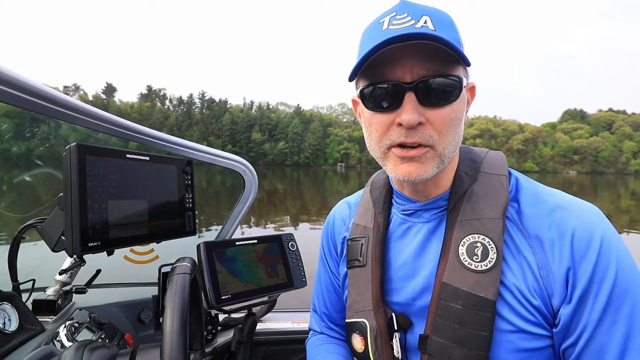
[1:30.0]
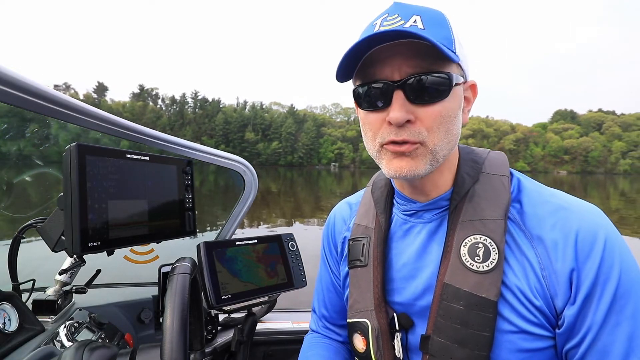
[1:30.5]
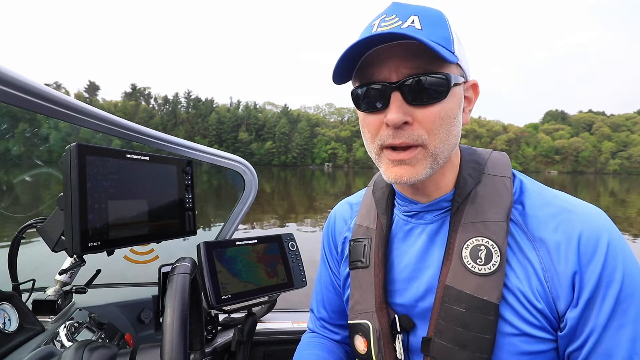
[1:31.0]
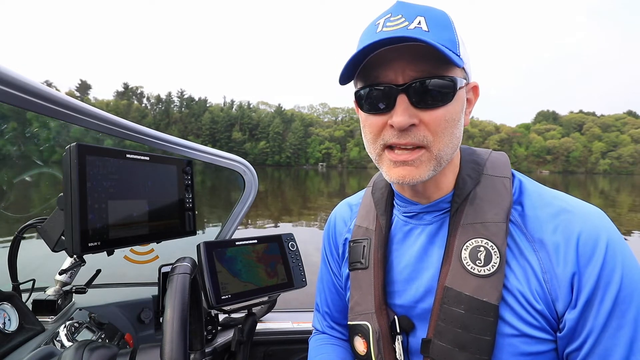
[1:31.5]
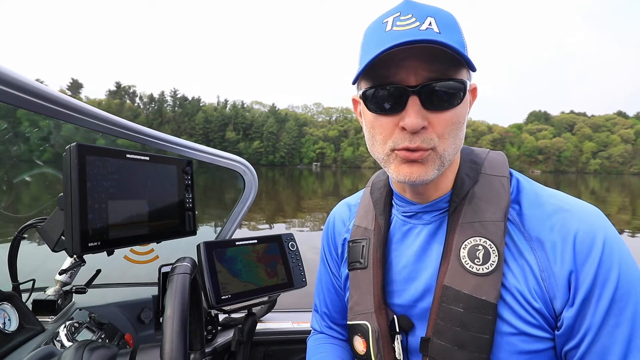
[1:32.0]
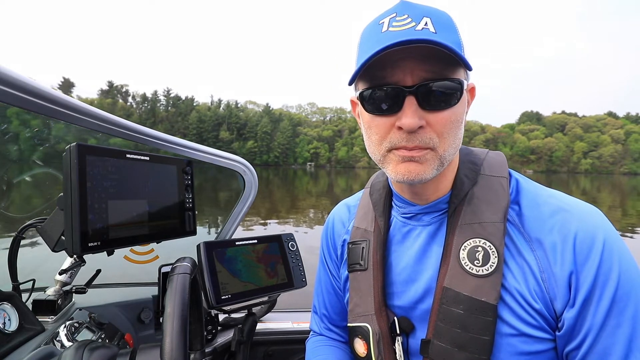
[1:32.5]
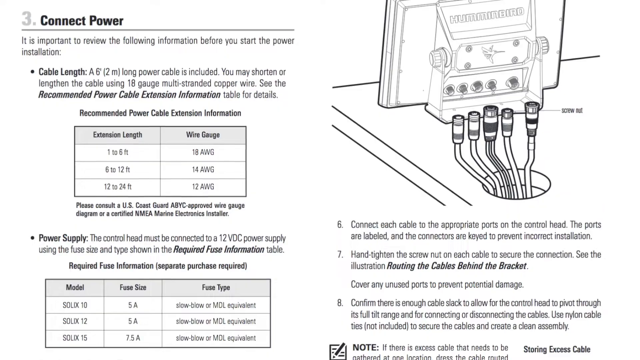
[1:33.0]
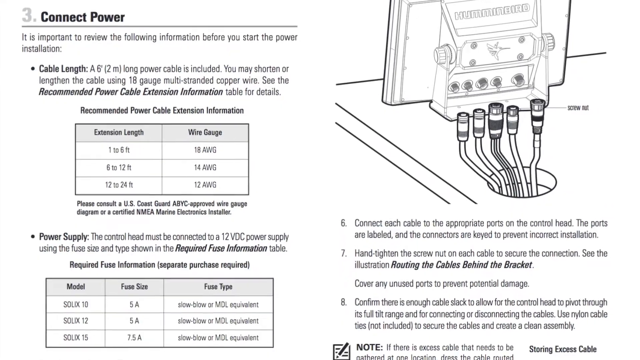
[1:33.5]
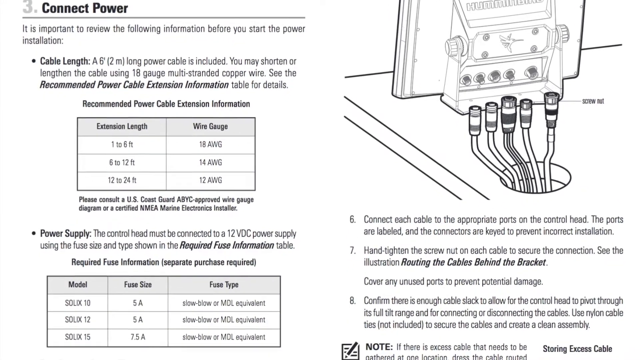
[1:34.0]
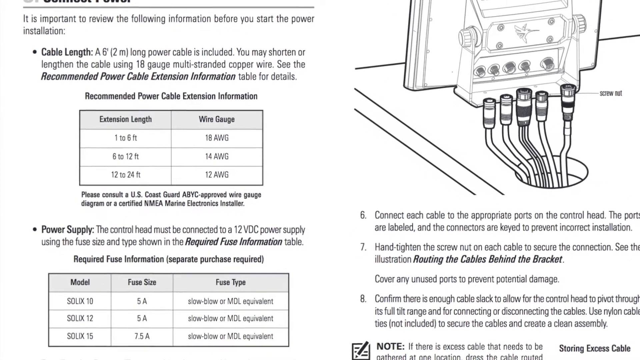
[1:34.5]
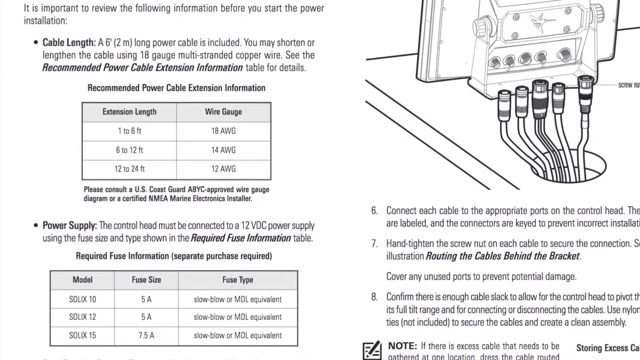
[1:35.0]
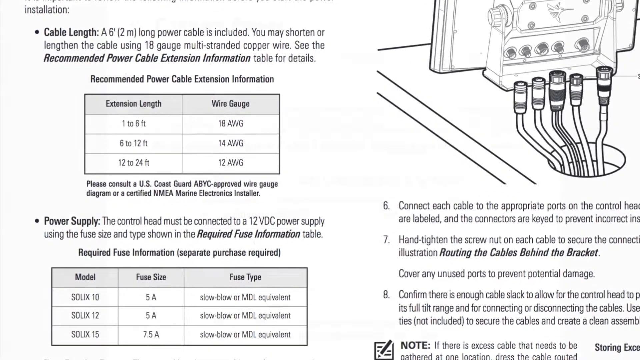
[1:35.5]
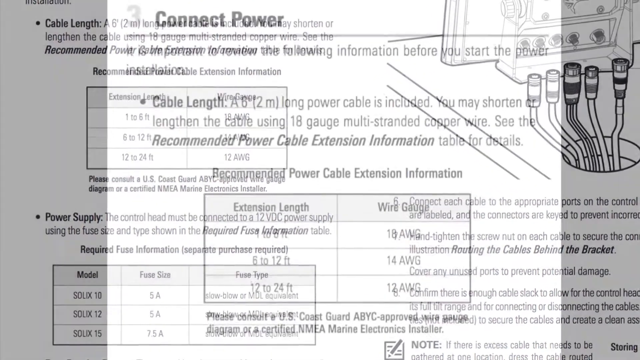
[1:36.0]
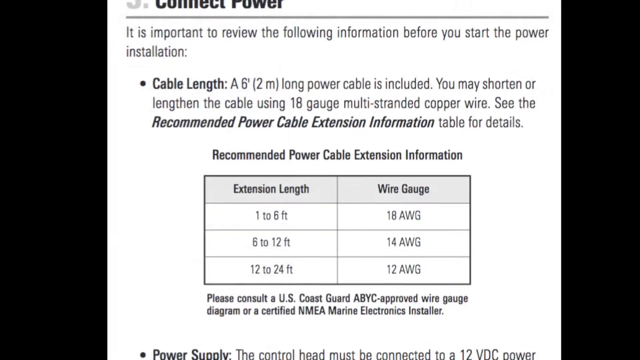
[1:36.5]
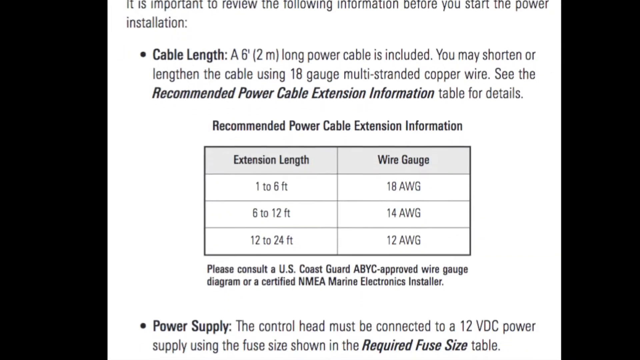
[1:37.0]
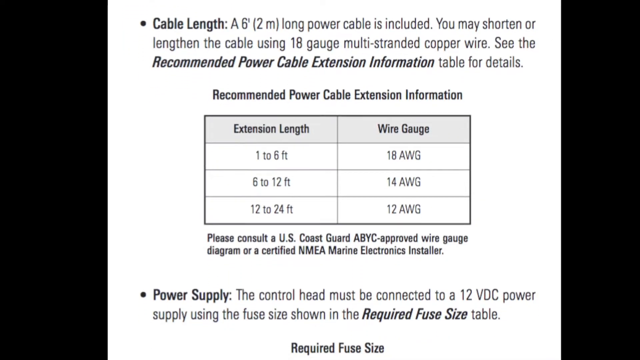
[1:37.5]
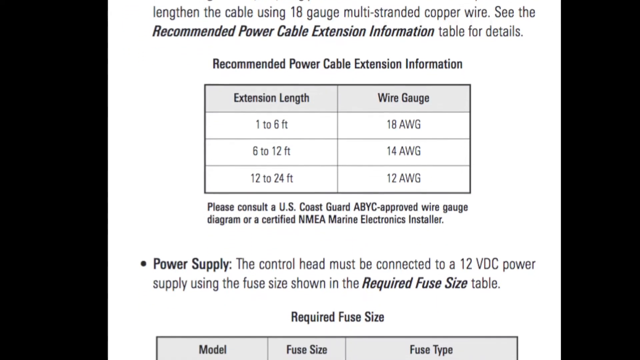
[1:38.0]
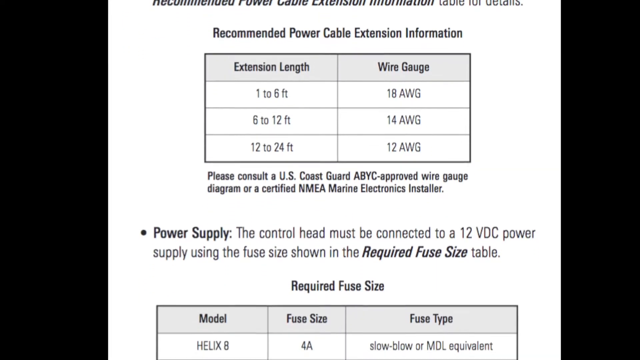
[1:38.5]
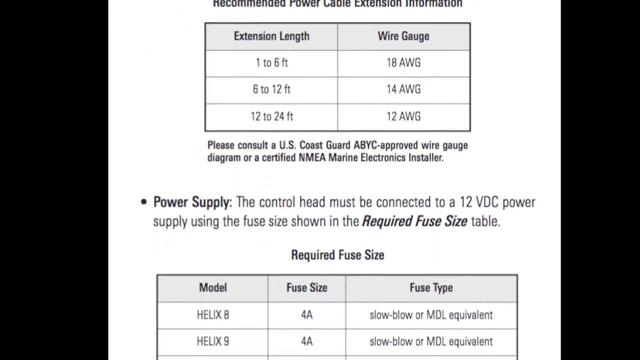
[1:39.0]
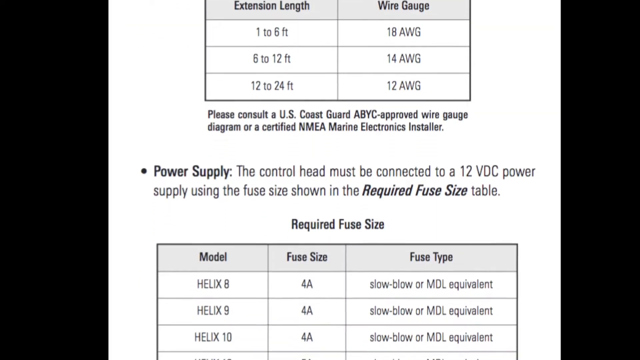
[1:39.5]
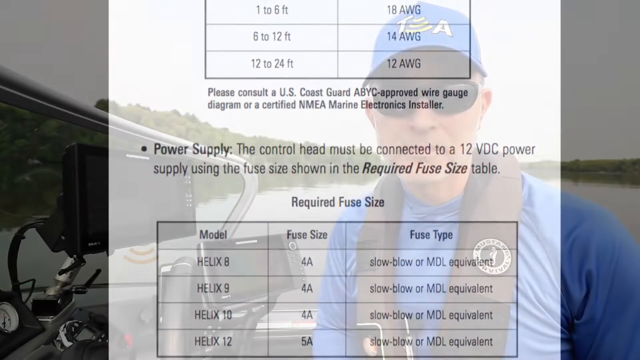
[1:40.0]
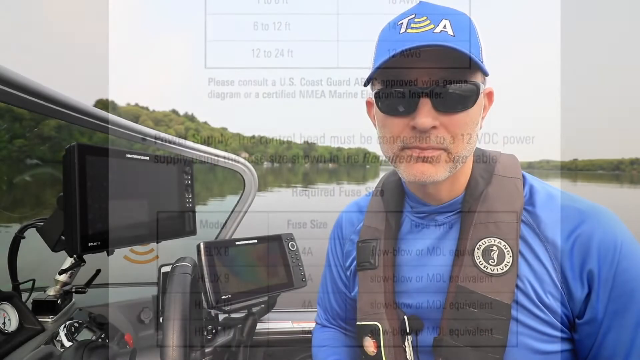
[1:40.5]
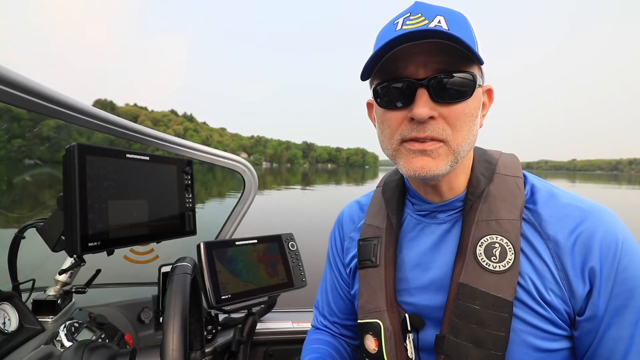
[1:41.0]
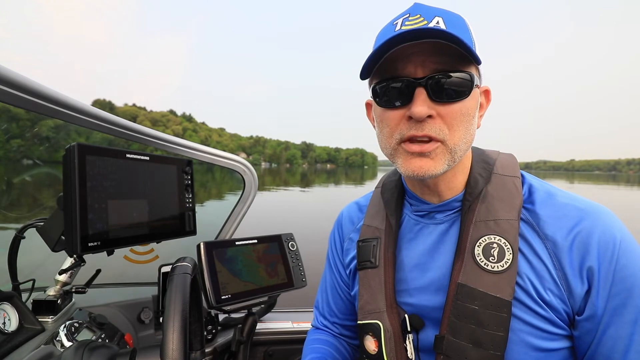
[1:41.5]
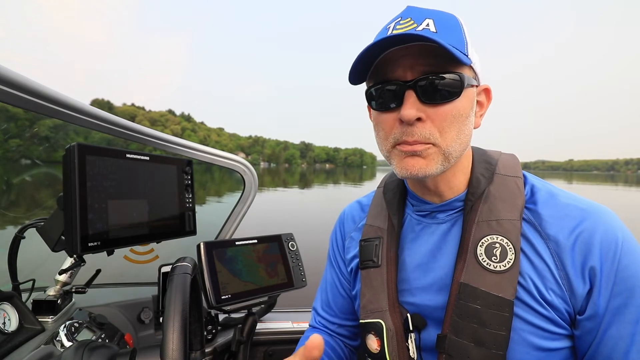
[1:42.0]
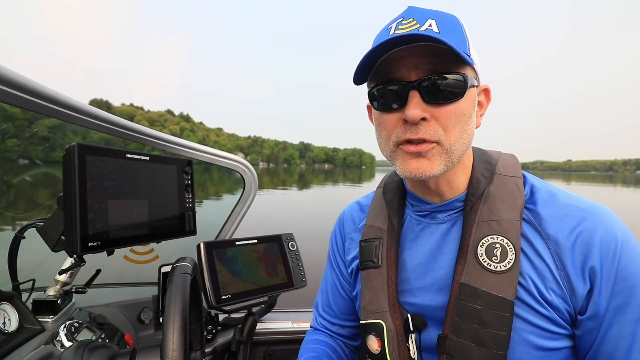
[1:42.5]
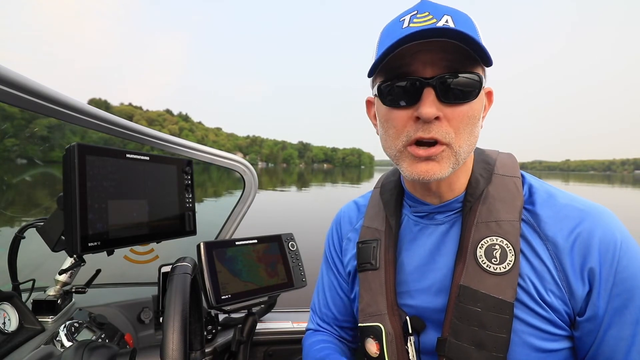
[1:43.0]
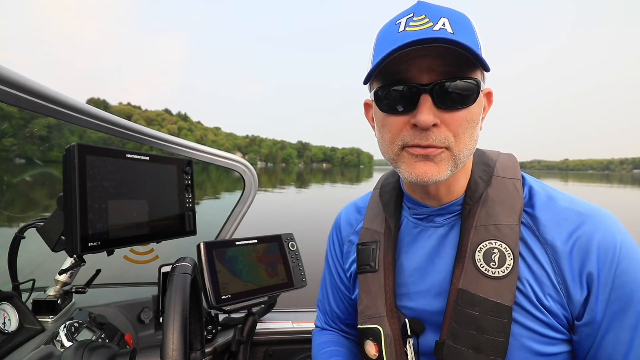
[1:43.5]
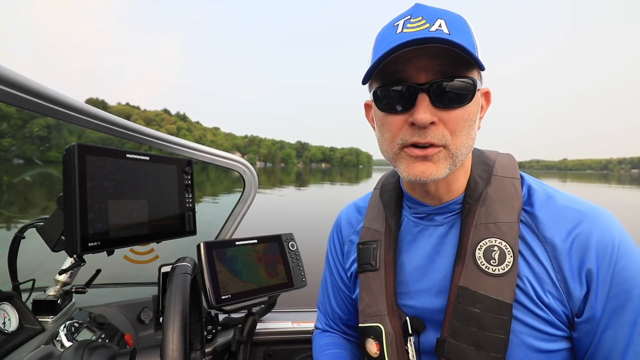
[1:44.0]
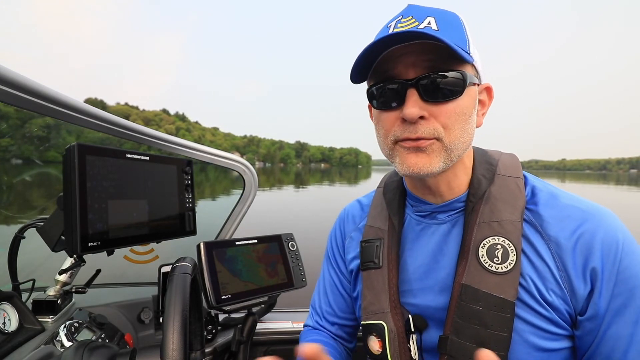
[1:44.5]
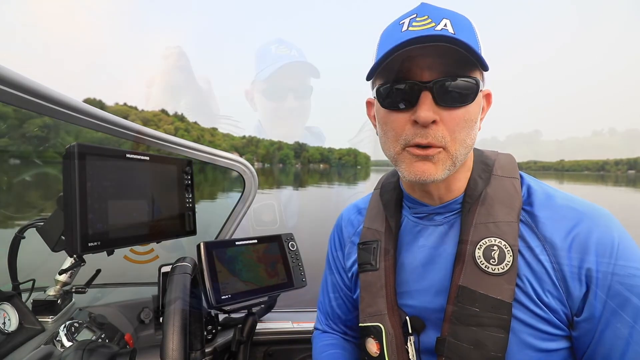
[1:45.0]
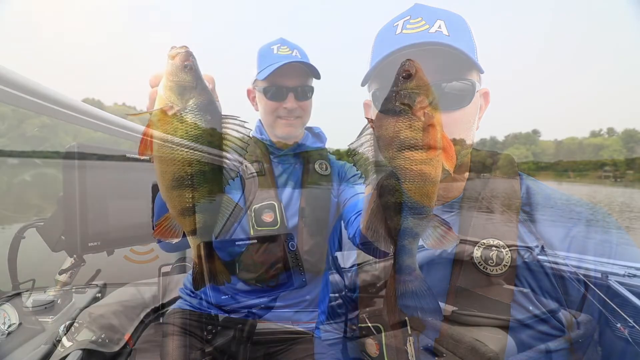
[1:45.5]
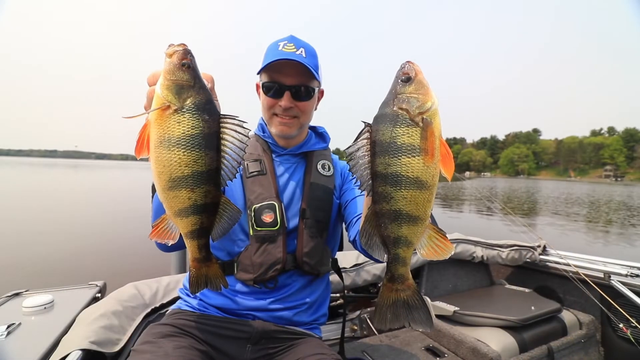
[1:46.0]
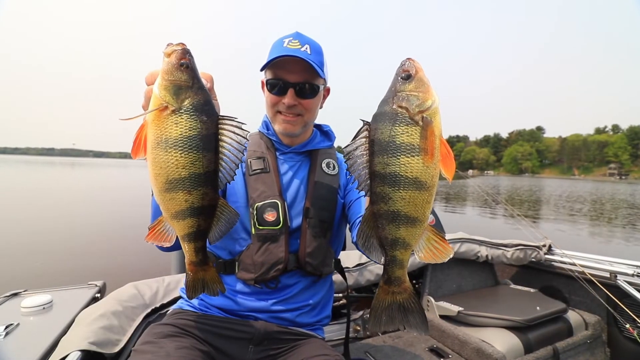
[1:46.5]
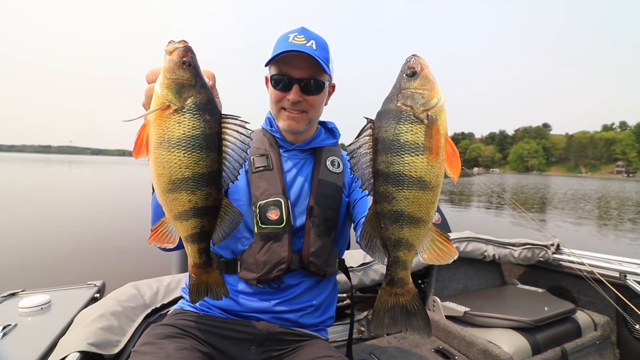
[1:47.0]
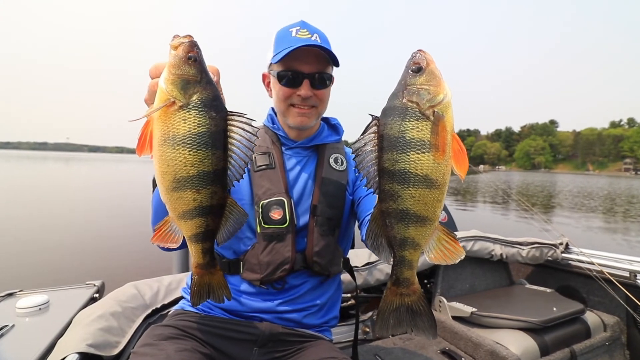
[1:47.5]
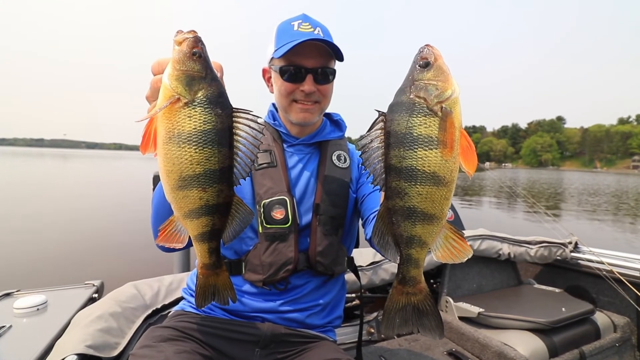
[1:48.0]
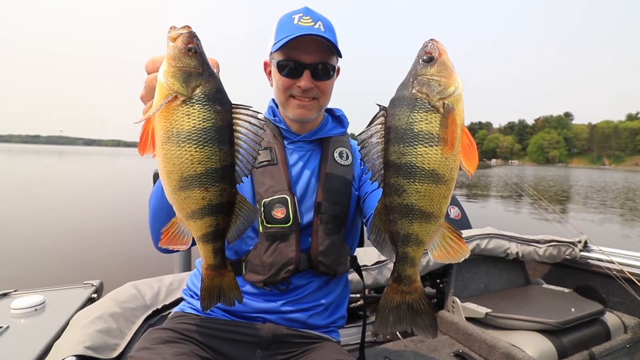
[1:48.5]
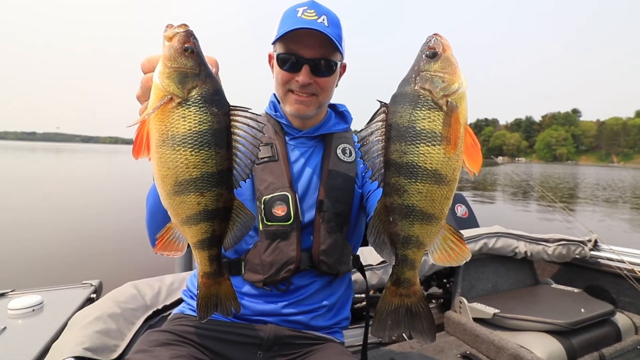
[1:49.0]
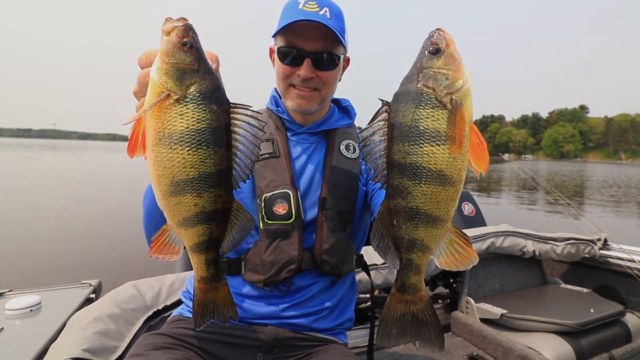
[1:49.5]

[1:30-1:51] A man sits inside a boat, with the camera angled slightly off-center of him. In the background are a grayish, clear sky, some trees and lake water. He consistently looks toward the camera and periodically toward the right while speaking. The video transitions to a white page that appears to be from an instruction manual, with text in the top left corner reading "connect power"; it shows how to connect power to the device. Next, a close-up shows the left section of text, columns and sections within the manual. The video transitions back to a different angle of the man out in the boat in the middle of the water, speaking and gesturing. The scene then cuts to him still inside the boat, smiling and holding up what appears to be two striped bass, one in each hand.